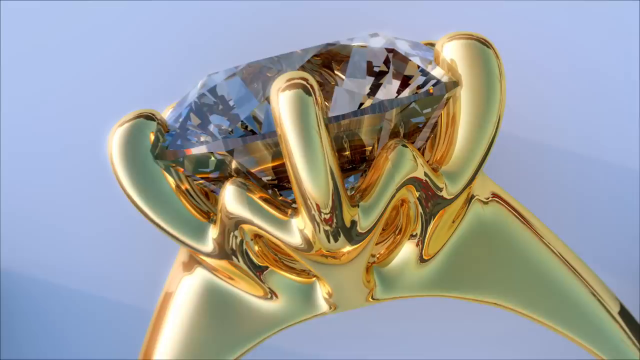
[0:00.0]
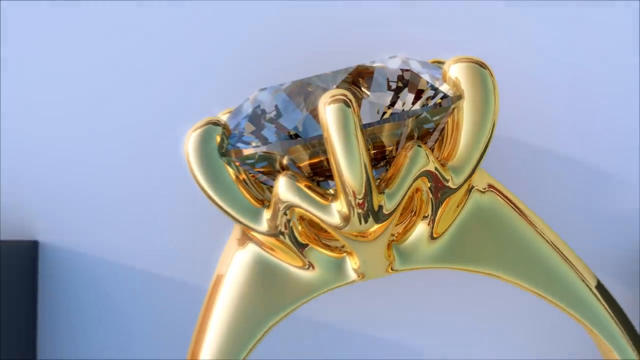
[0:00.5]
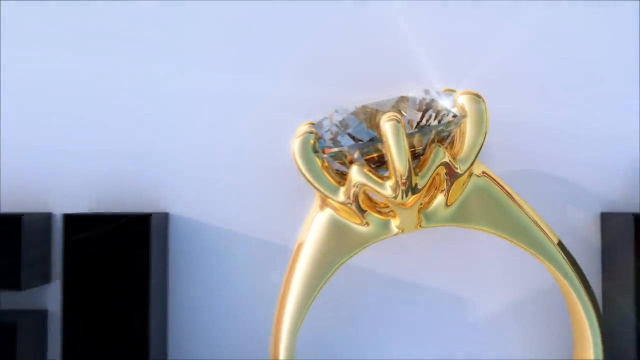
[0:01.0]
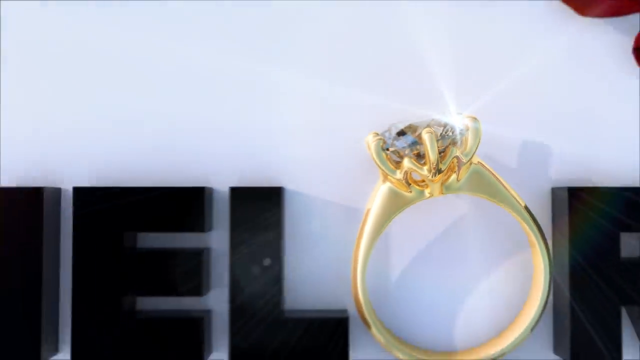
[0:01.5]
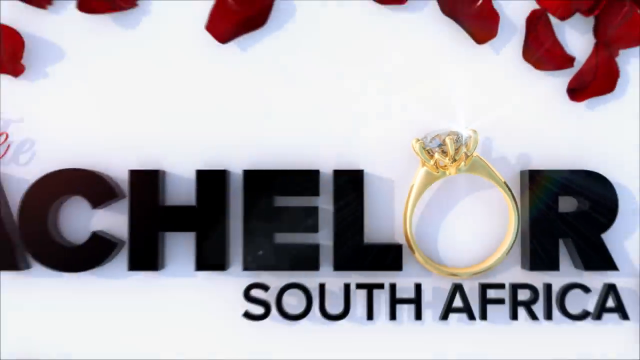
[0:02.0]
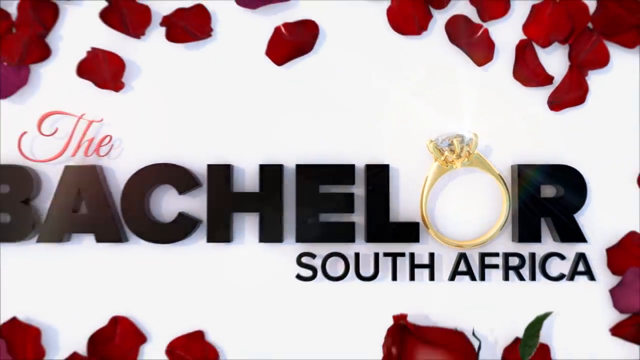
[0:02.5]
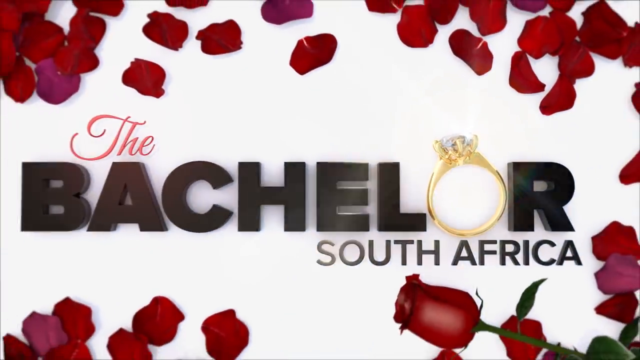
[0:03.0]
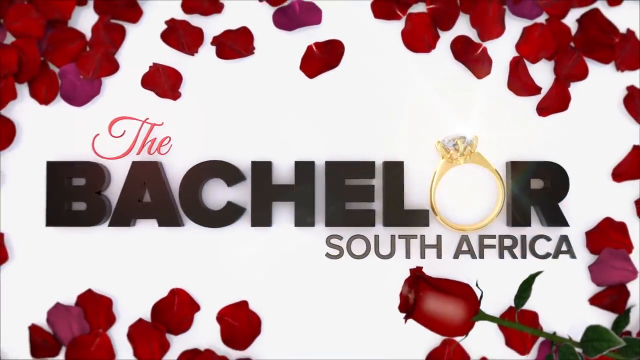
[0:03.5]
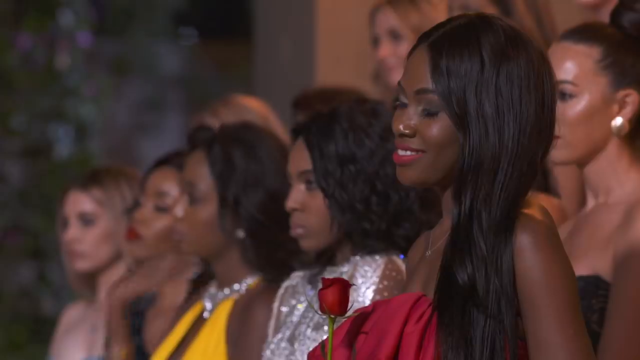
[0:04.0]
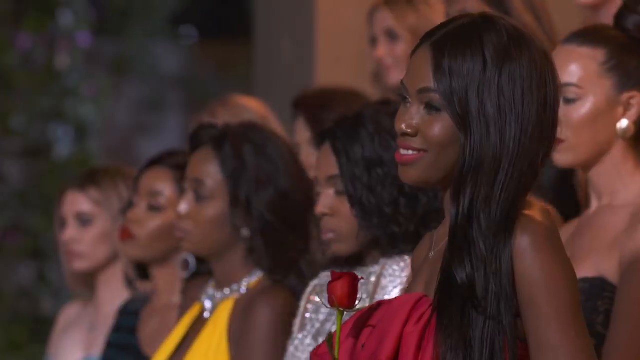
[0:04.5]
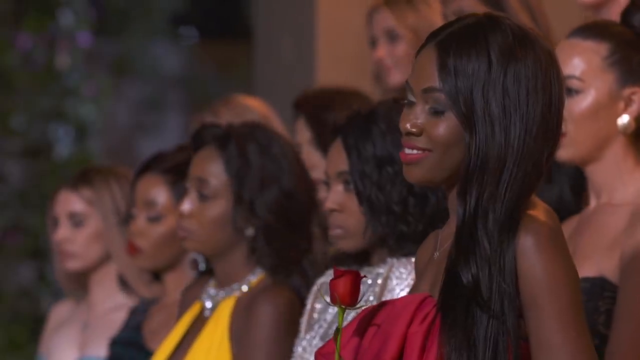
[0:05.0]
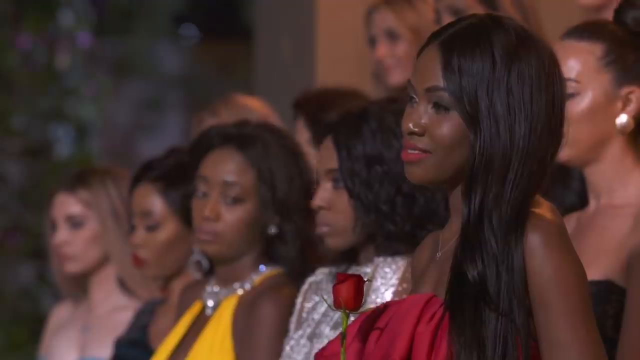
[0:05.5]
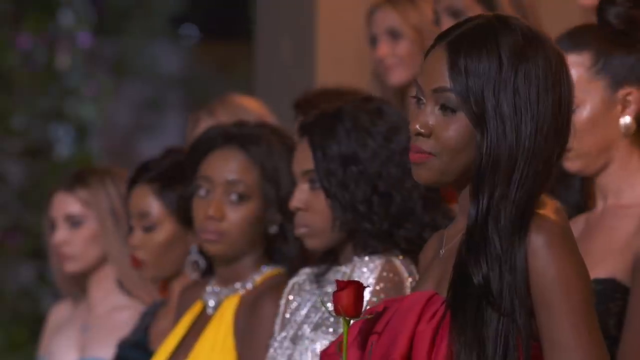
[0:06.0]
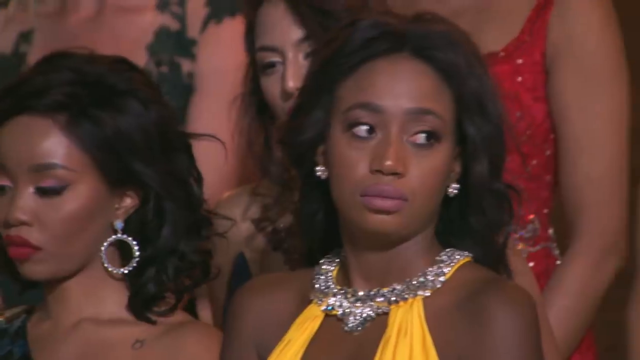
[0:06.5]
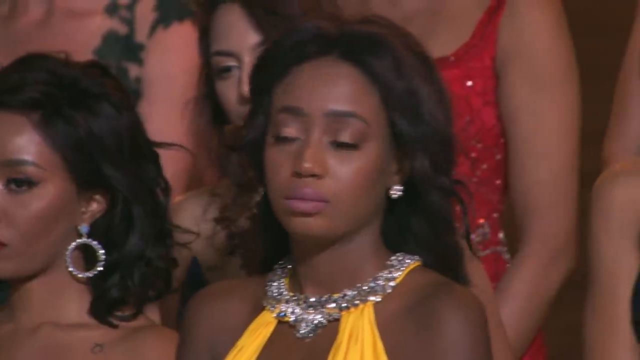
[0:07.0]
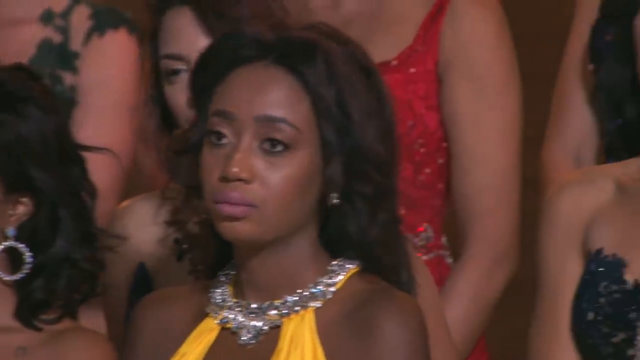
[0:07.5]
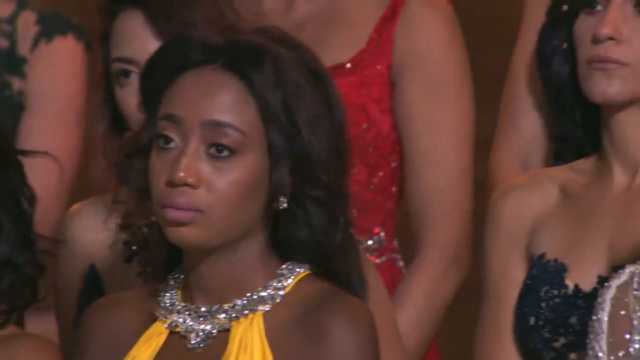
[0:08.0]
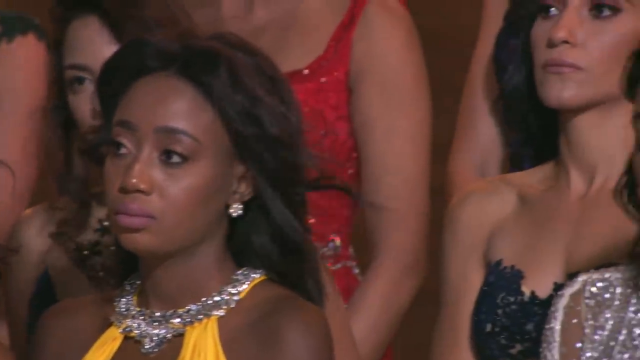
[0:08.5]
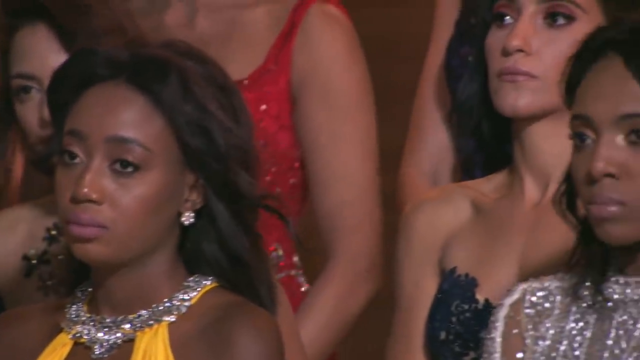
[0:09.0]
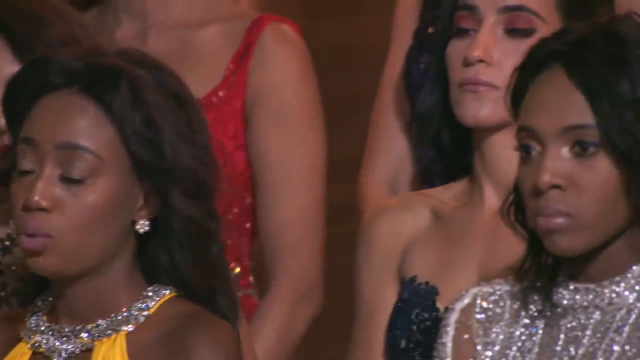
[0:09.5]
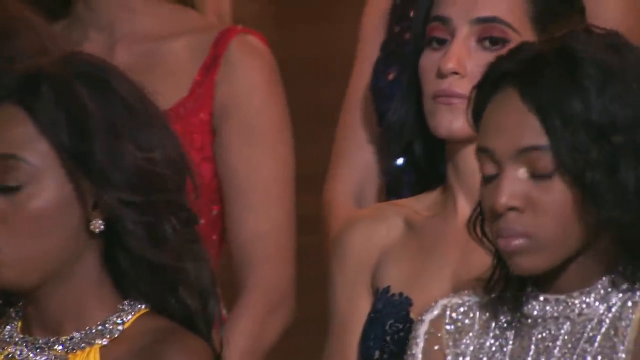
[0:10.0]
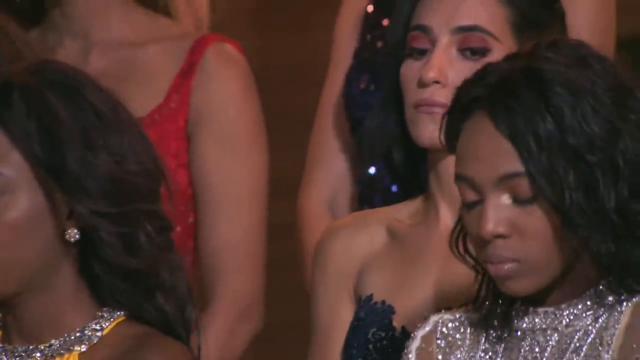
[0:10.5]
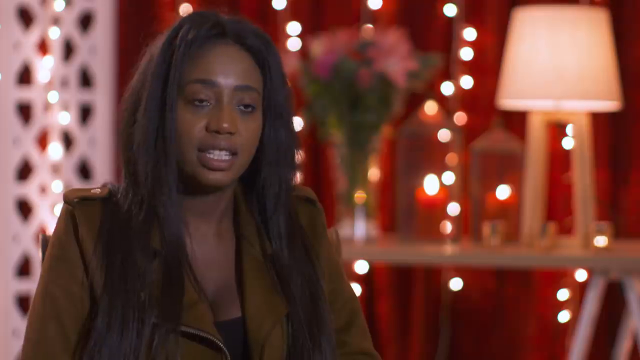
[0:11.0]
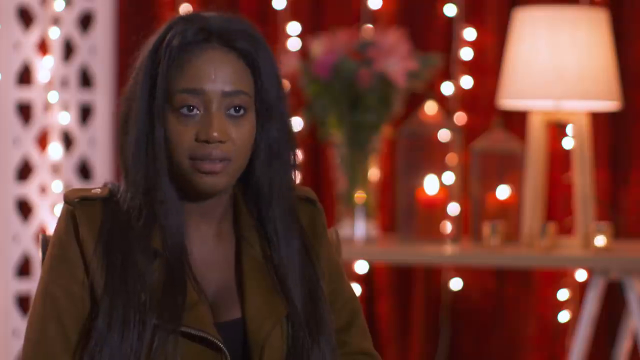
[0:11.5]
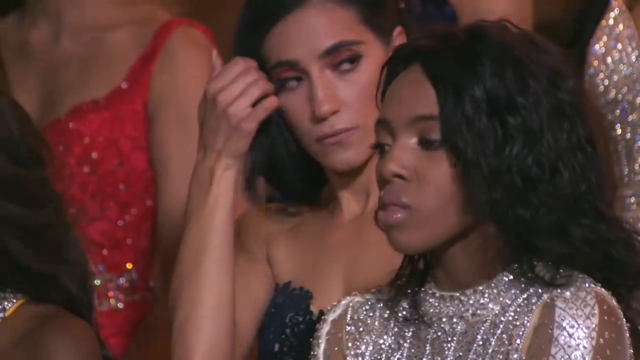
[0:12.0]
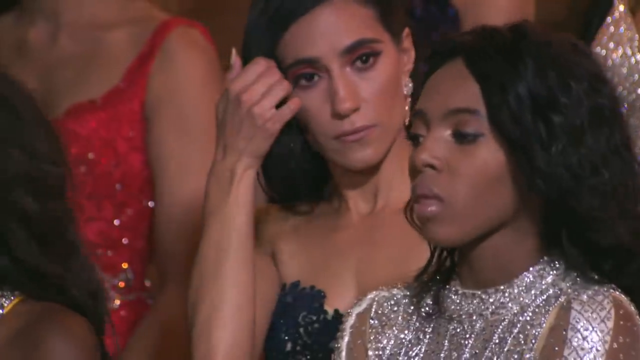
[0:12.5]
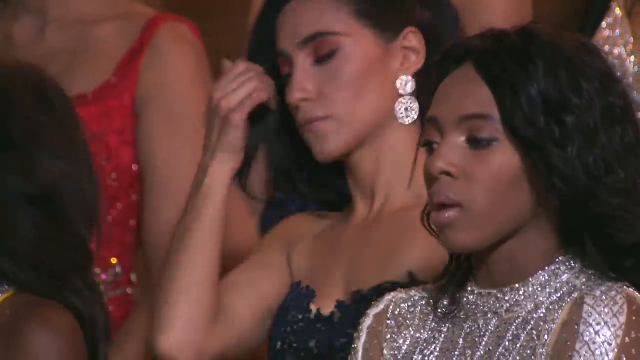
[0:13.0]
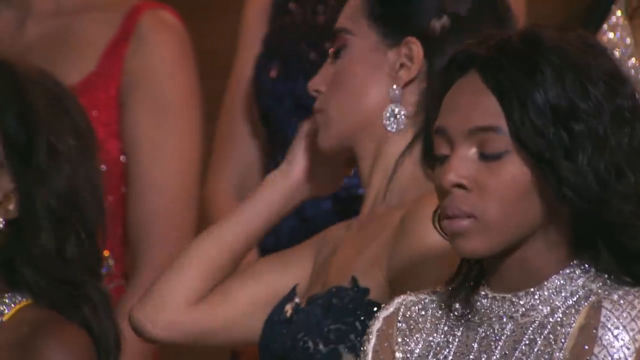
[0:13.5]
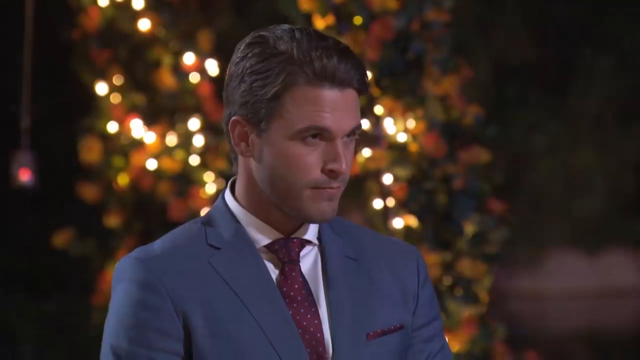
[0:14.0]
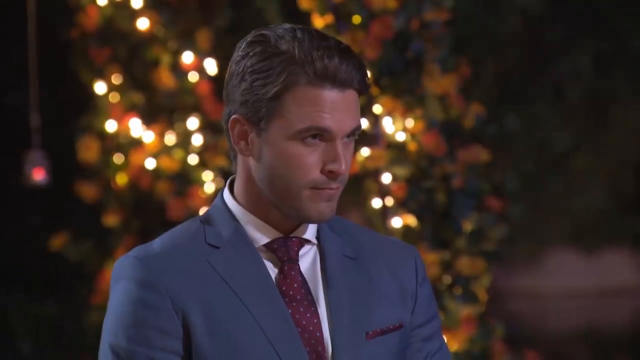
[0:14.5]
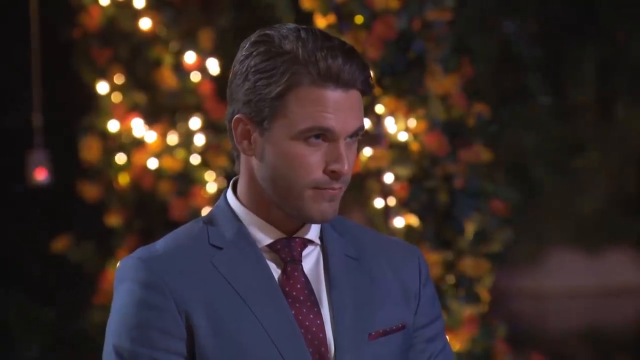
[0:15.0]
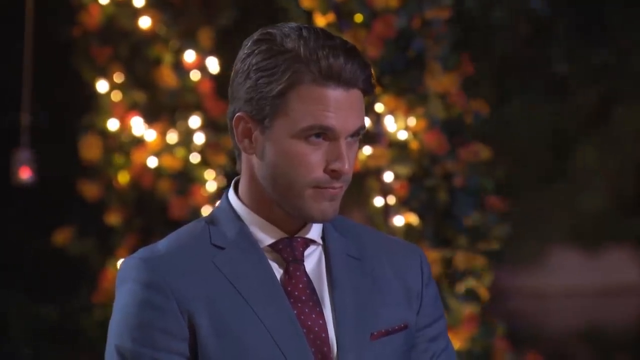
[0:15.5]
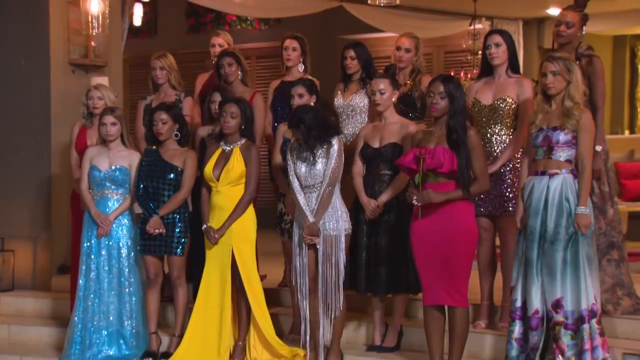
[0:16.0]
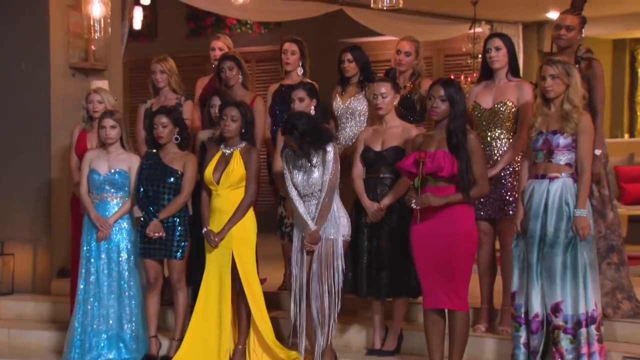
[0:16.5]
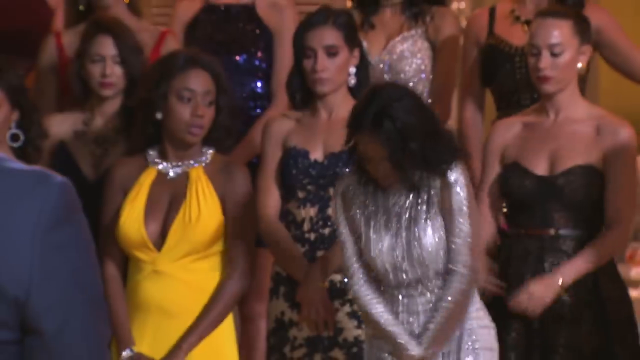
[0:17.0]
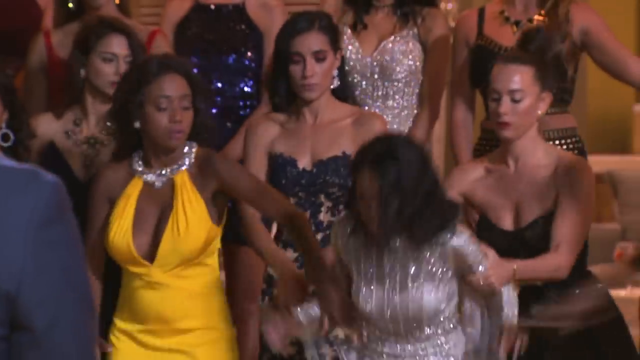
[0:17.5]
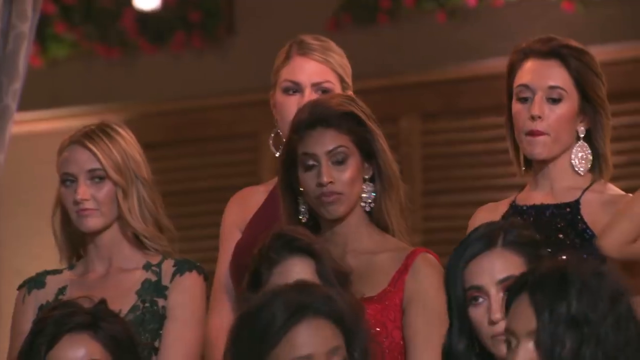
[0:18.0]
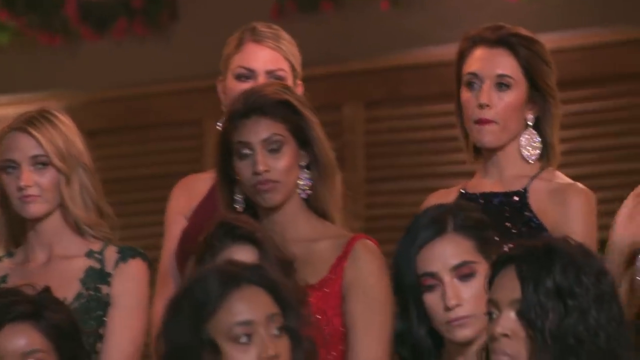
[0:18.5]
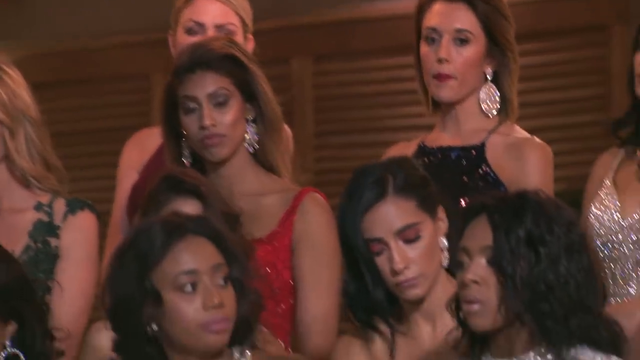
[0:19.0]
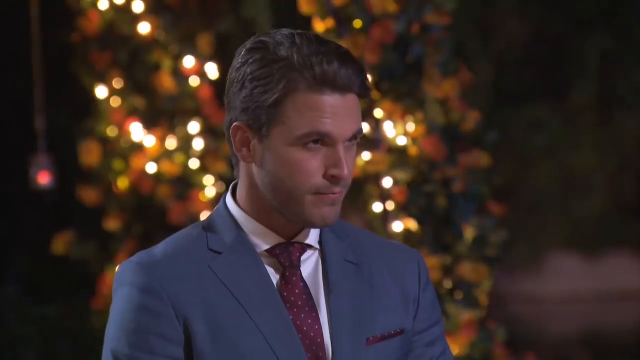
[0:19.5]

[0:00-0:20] The video begins on a solid white background with a close-up of a circular golden ring set with a diamond in a flower-like gold setting. The view zooms out, revealing red roses and florals scattered around it on the solid white background. The text reads "THE" in red font, with "BACHELOR" underneath in black font and "South Africa" in black just below that. The scene quickly changes to an audience of about 10 women, predominantly black or of African origin, along with a couple of white audience members. The women, dressed in formal dresses, smile at the camera, and they seem very nervous as the camera moves from left to right across them. The screen briefly cuts to an interview with one of the women, then returns to the audience, who nod and shake their heads.